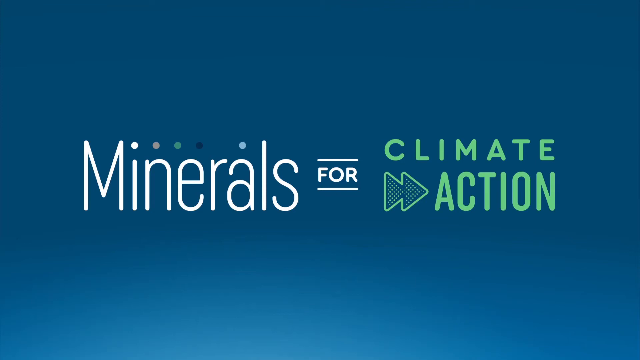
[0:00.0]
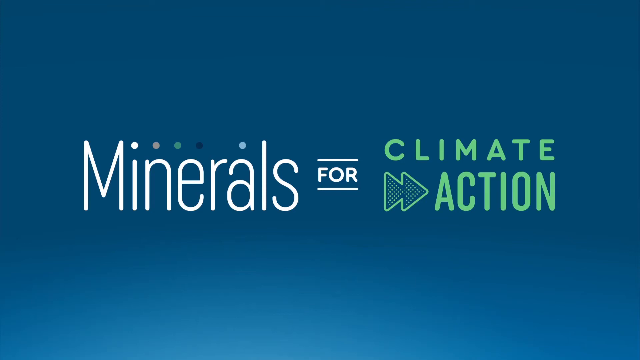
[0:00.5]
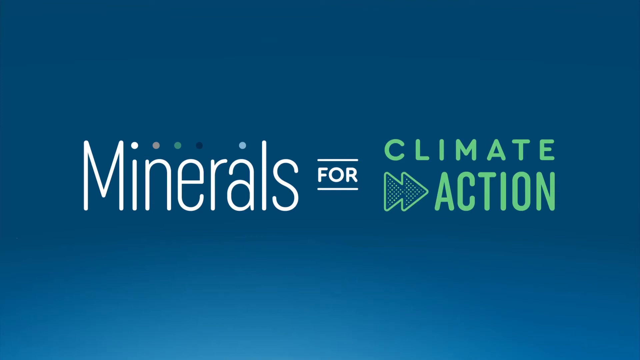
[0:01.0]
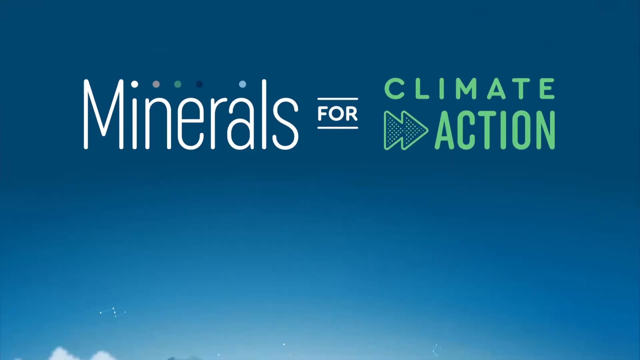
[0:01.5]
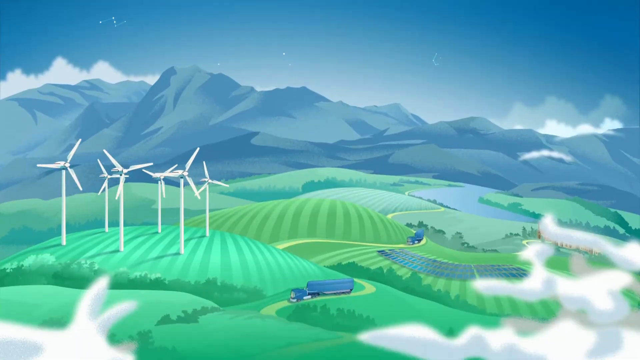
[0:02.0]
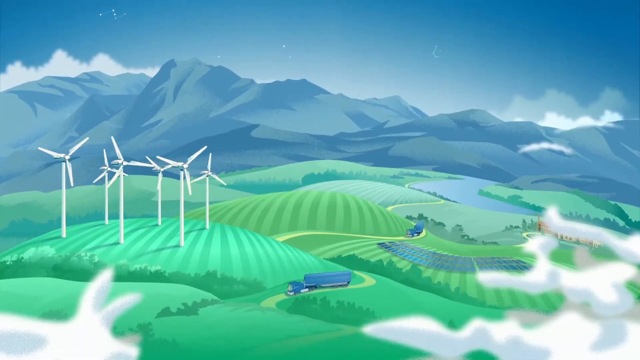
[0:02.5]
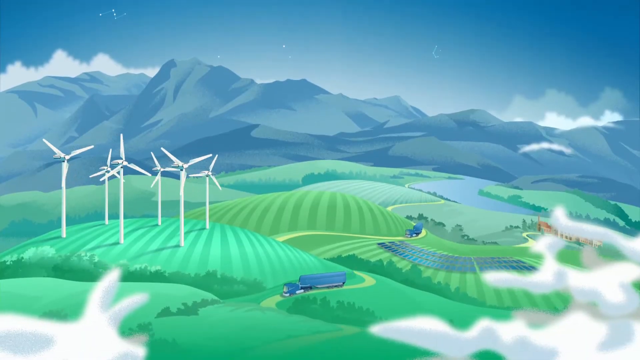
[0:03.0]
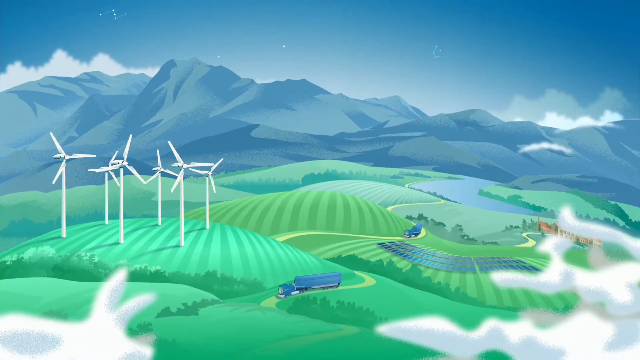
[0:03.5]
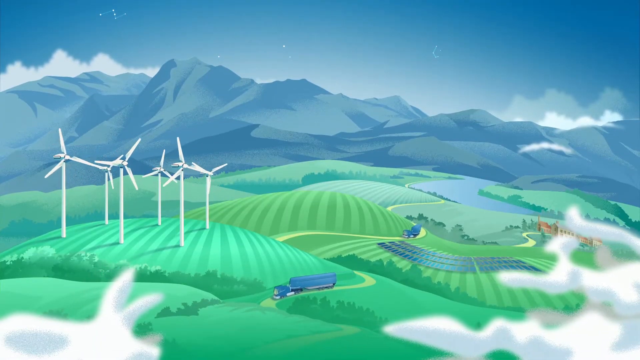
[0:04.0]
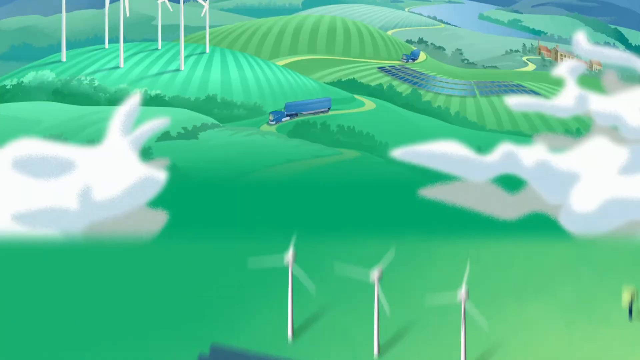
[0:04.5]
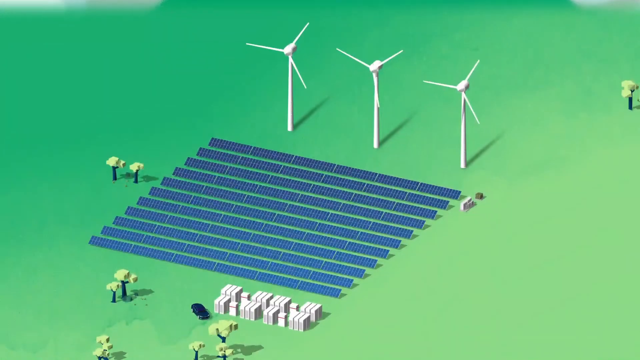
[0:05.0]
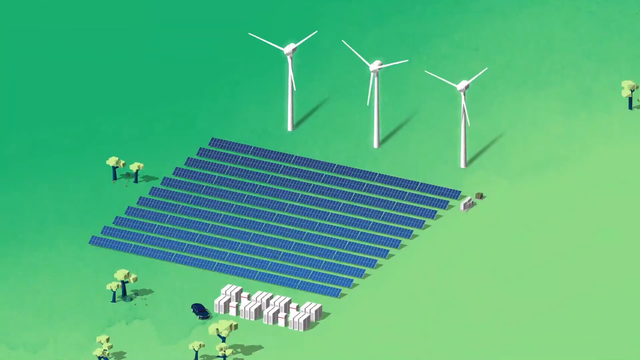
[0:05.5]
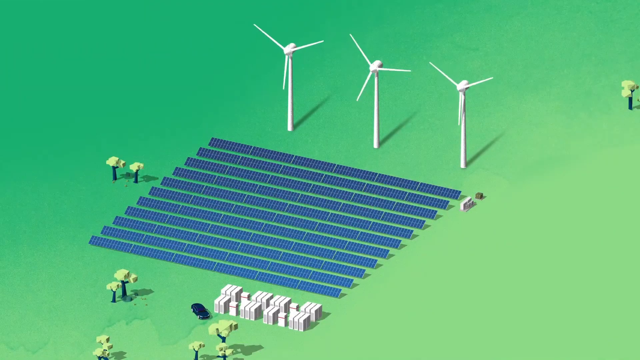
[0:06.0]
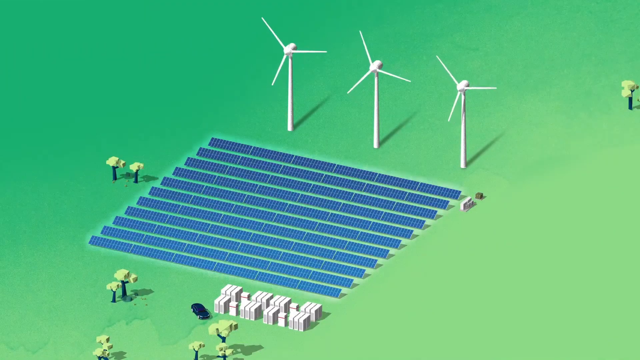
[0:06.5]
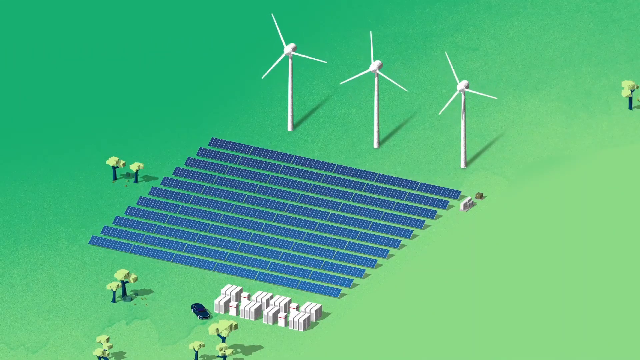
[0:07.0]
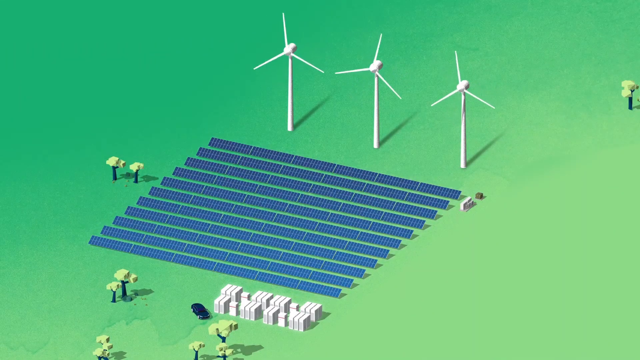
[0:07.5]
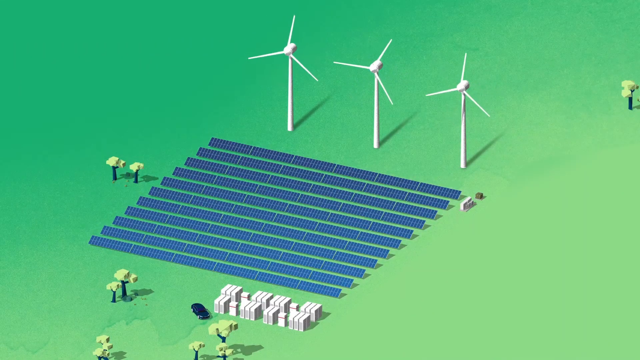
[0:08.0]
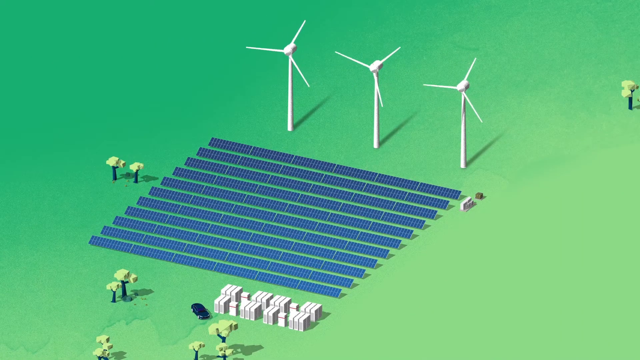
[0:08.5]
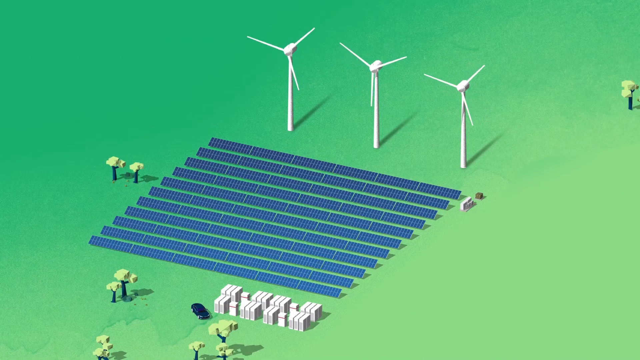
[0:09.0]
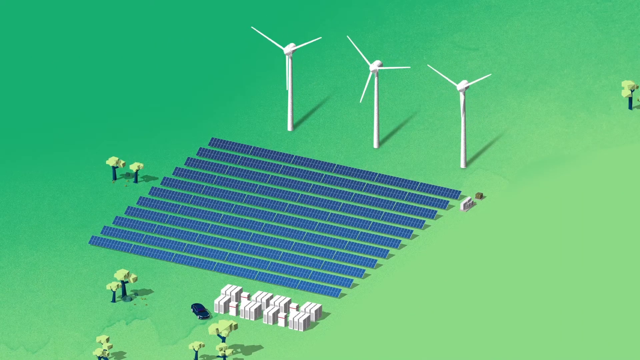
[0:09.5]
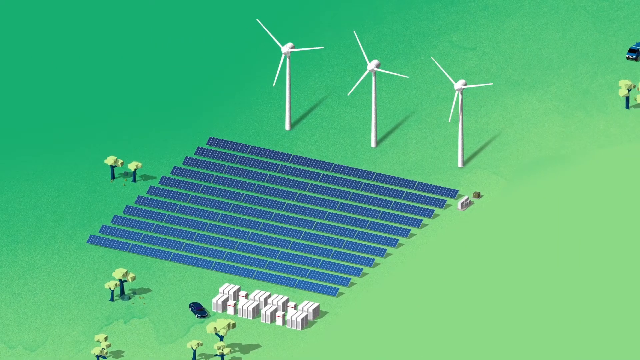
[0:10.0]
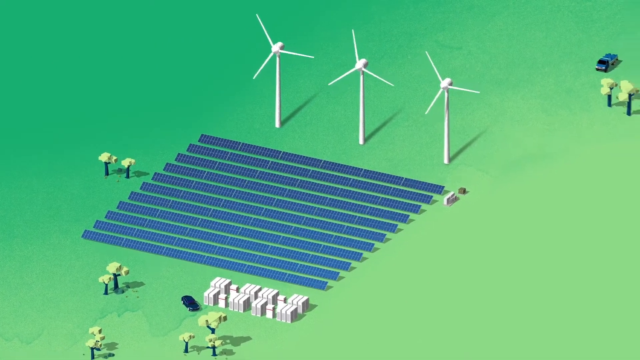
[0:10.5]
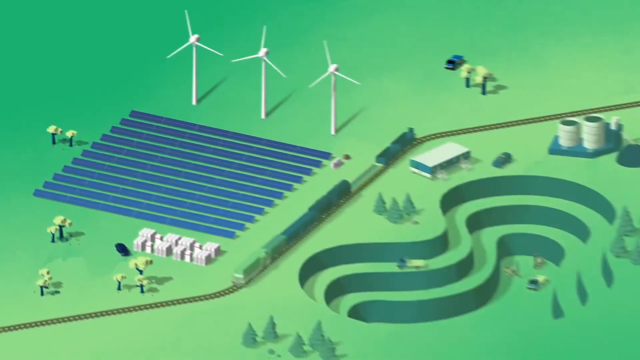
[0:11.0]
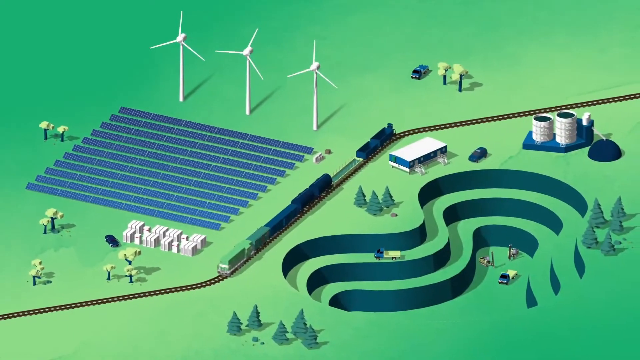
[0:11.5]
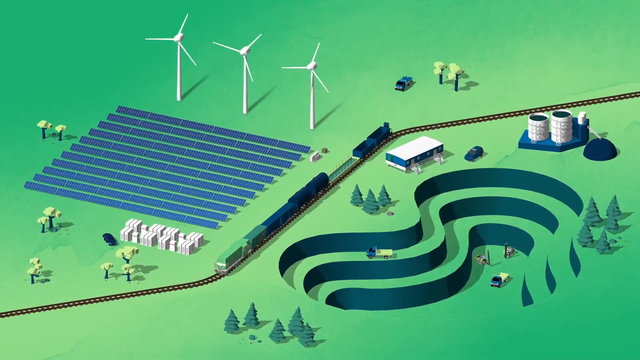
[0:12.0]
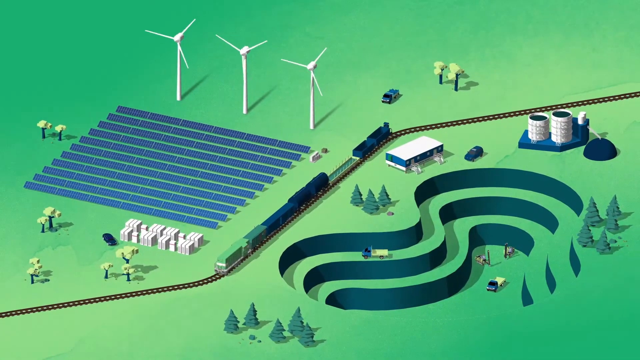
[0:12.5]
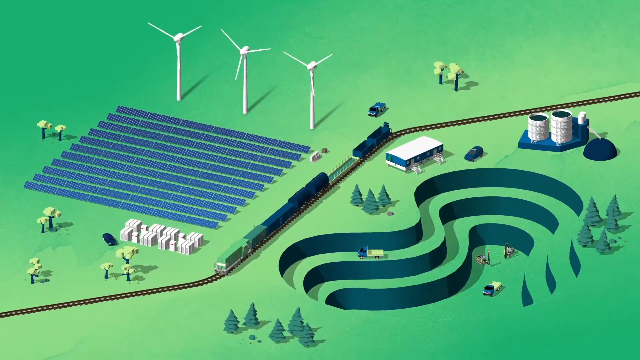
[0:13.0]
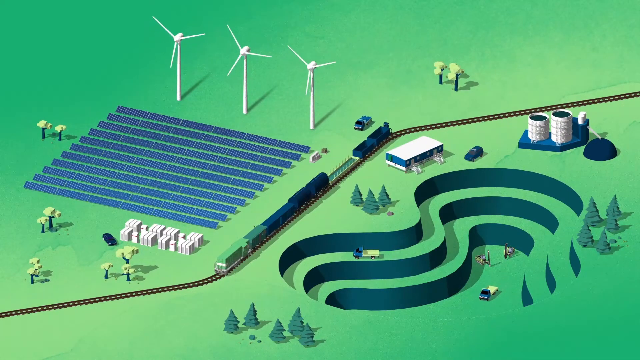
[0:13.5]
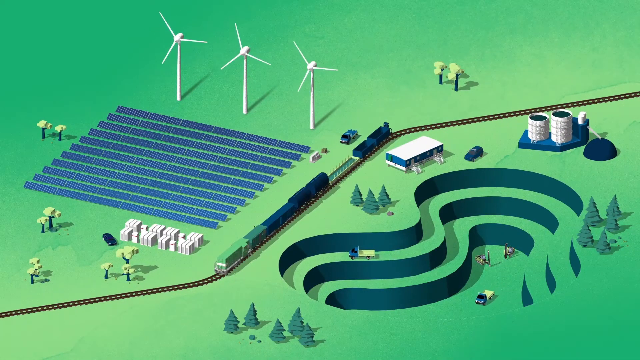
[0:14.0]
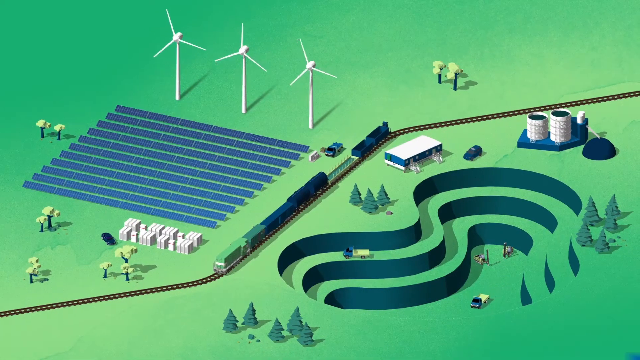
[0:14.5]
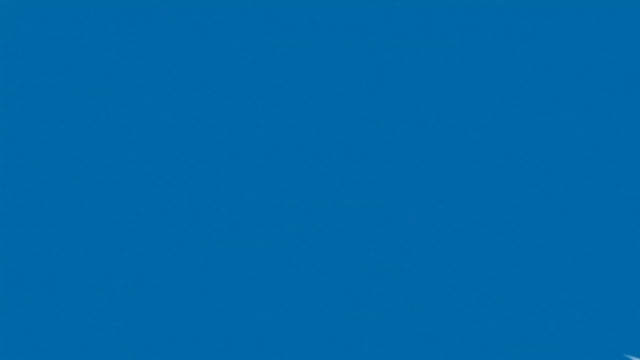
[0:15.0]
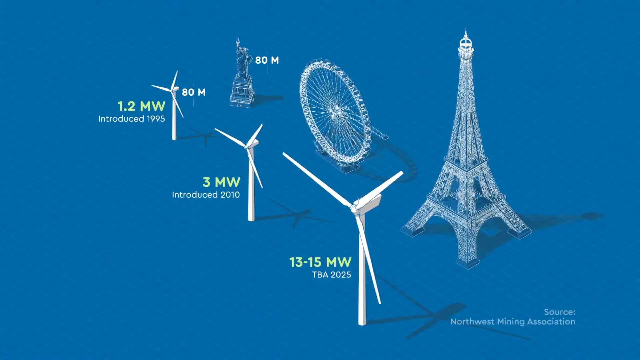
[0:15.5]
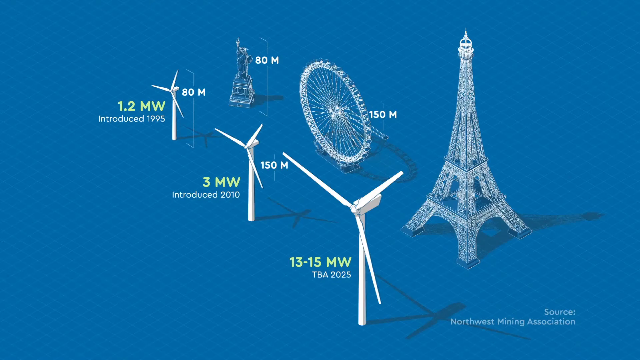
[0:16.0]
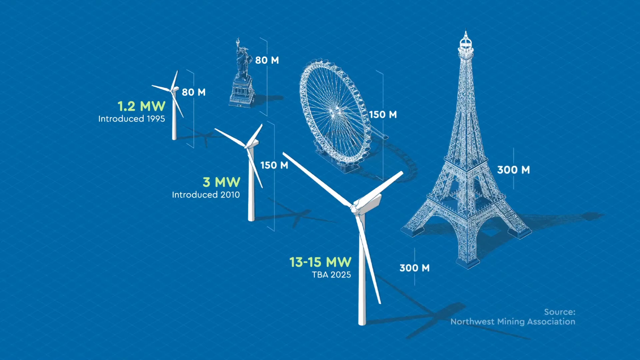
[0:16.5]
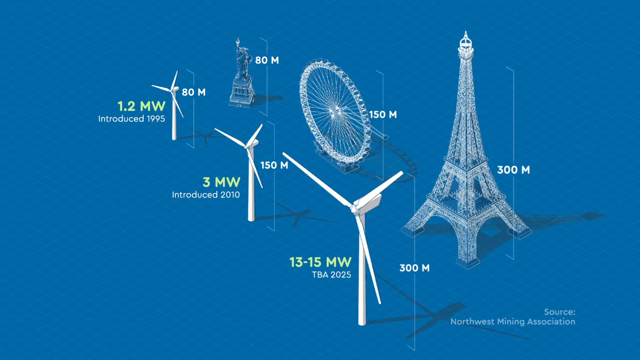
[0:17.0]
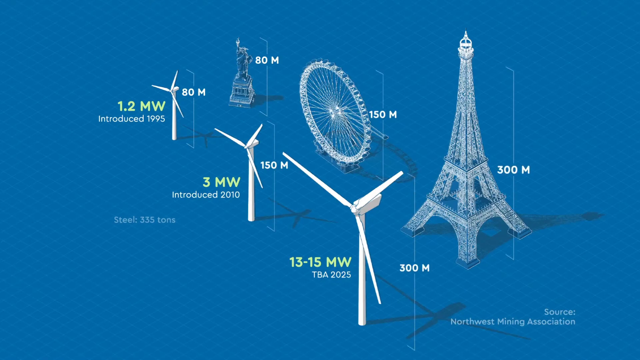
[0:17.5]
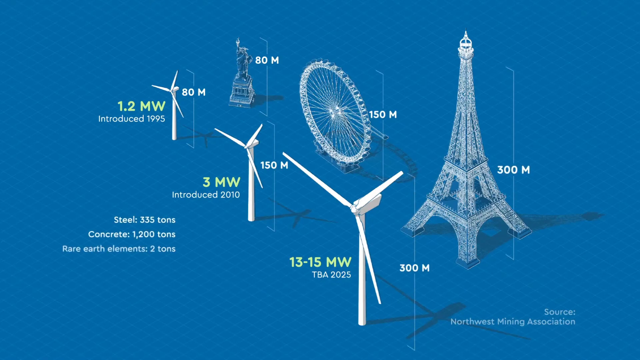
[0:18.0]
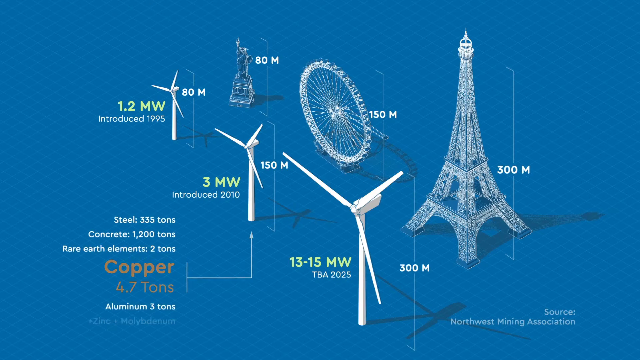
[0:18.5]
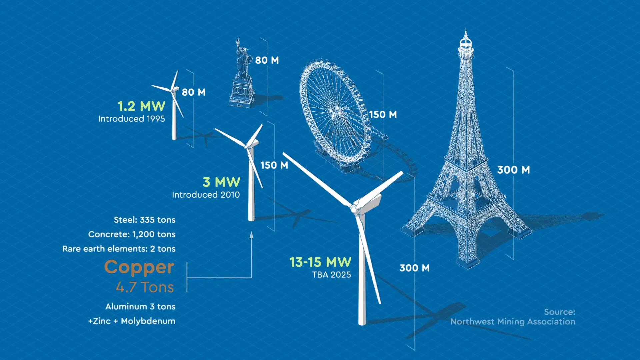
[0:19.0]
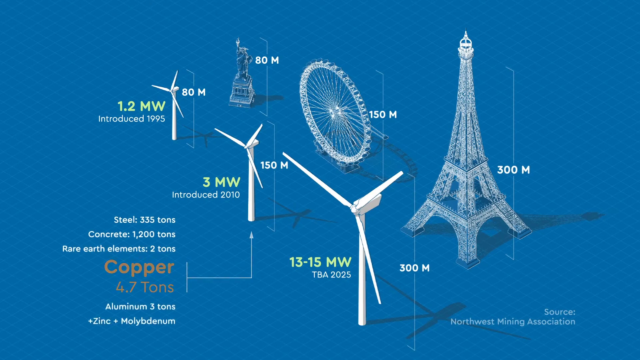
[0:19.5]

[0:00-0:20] The video opens with the text "minerals and climate action." It then moves to what looks like an animated outdoor scene: a valley with a river, mountains in the back, several white windmills on the left-hand side, some clouds, and rows like farmland, apparently rows in the fields. A blue truck, maybe some kind of tanker, drives down a road, and possibly another tanker is on the road. There are maybe some buildings in the distance down in the valley. The scene then closes in on a field with three white windmills and blue objects that look like solar panels. Beside the panels are unidentified things with blue columns and yellow tops. There is green grass, and white objects that look like chips are placed close next to each other. The windmills are turning. Next comes a scene with a train on a railroad track, pine trees, and levels built into the ground in an odd shape; there appear to be three levels, almost like steps going down into a big hole. A building is on the side of this shape, along with a couple of silos, and cars or trucks move around. Then a blue screen shows three windmills labeled 1.2 MW, 3 MW and 13 to 15 MW with their years: the 1.2 MW was introduced in 1995 and is apparently 80 meters, the 3 MW was introduced in 2010, and the 13 to 15 MW was introduced in 2025. What appear to be an Eiffel Tower, a Ferris wheel and the Statue of Liberty are shown for height comparison: the Statue of Liberty at 80 meters, the Ferris wheel at 150 meters and the Eiffel Tower at 300 meters. Text mentions copper and lists steel apparently at 335 tons, concrete at 1,200 tons and rare earth elements at 2 tons.